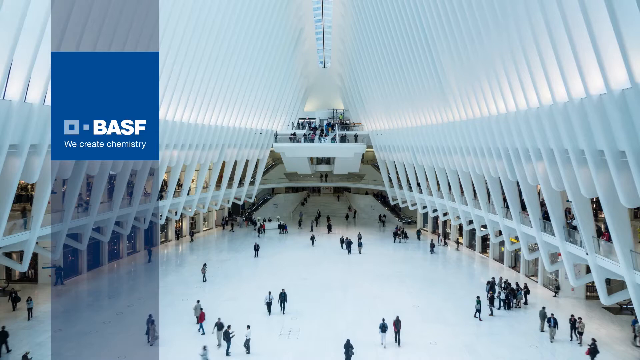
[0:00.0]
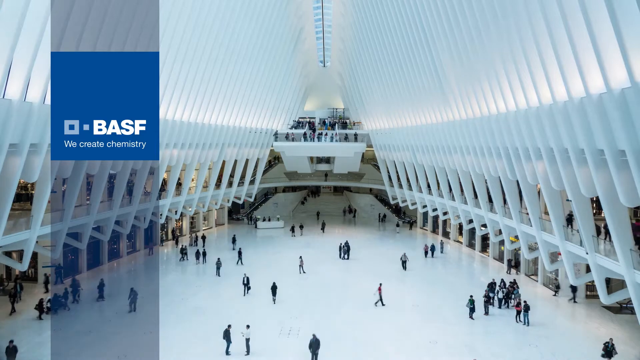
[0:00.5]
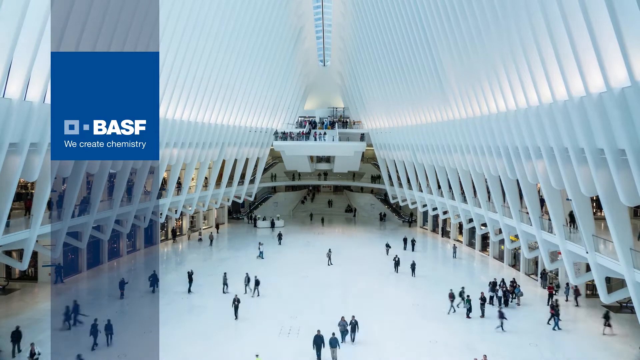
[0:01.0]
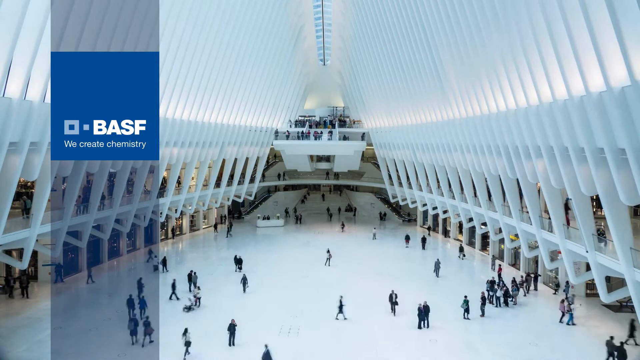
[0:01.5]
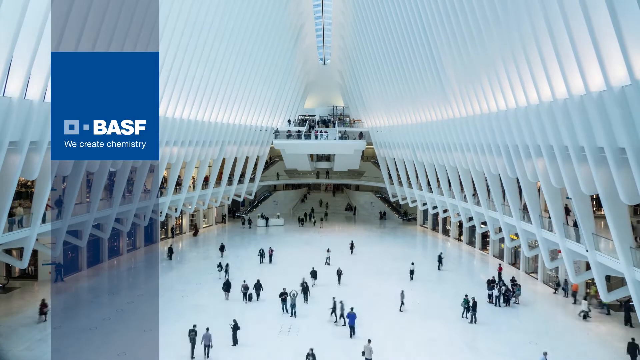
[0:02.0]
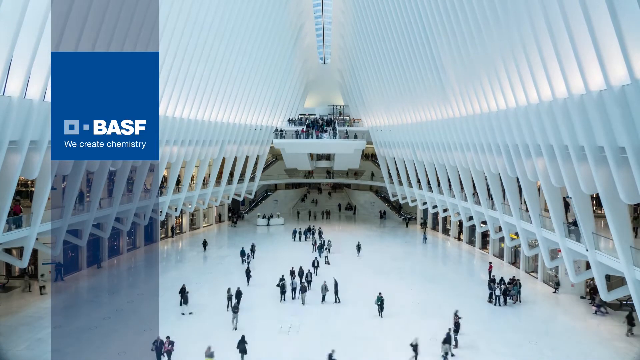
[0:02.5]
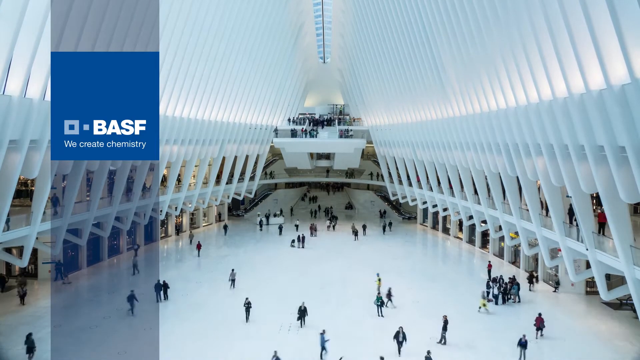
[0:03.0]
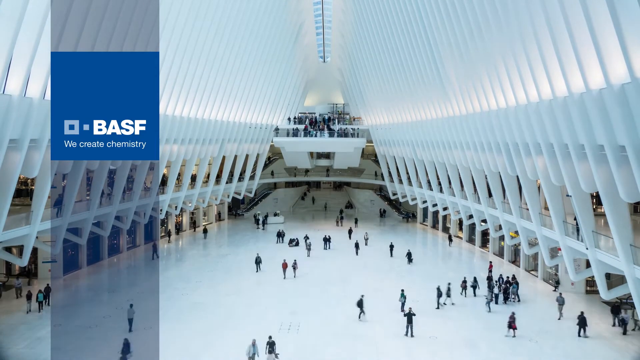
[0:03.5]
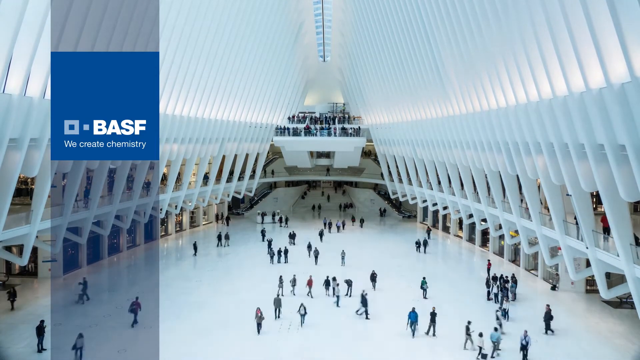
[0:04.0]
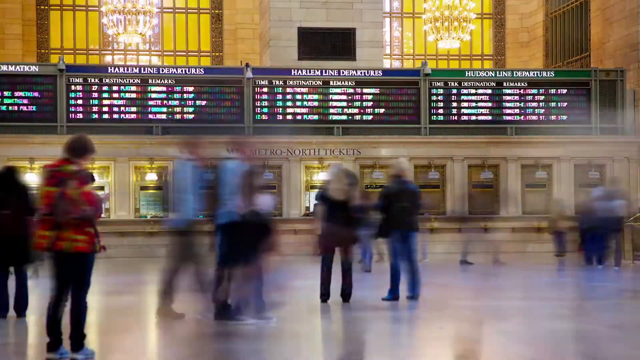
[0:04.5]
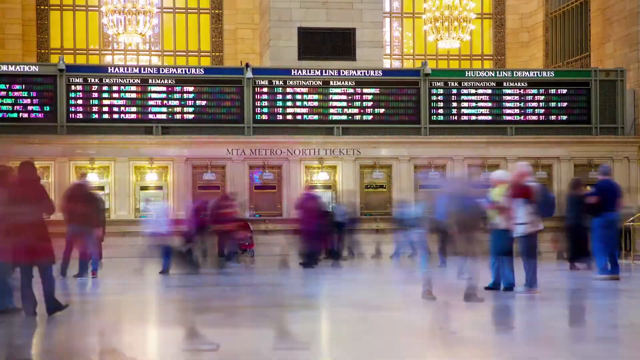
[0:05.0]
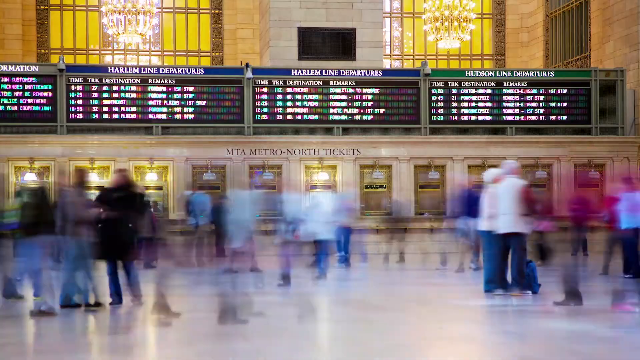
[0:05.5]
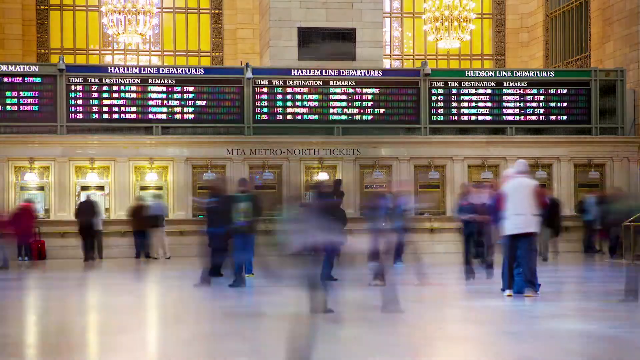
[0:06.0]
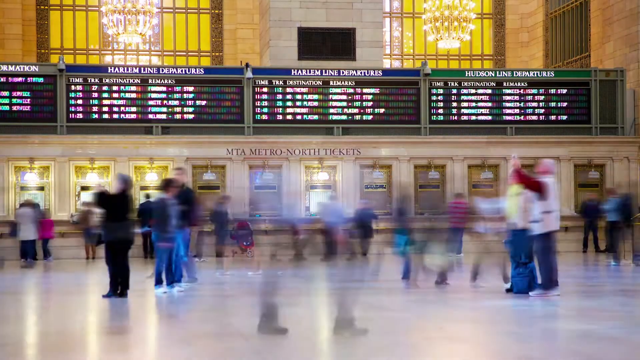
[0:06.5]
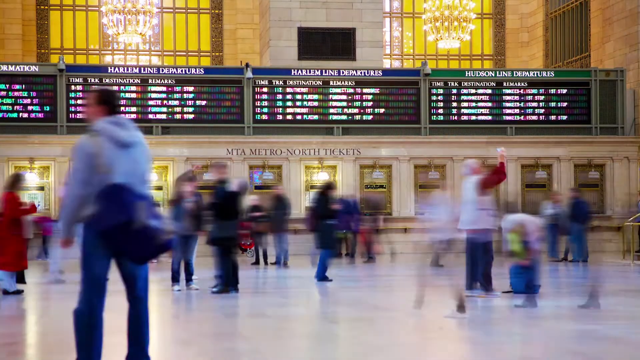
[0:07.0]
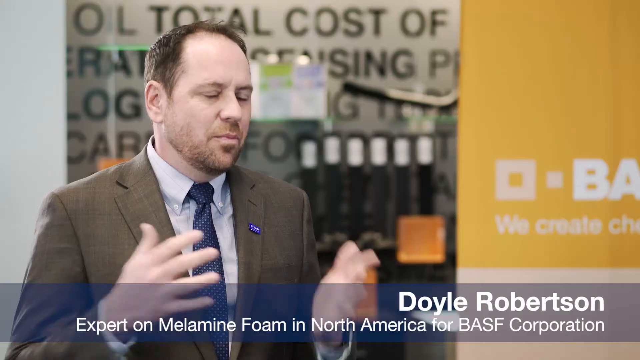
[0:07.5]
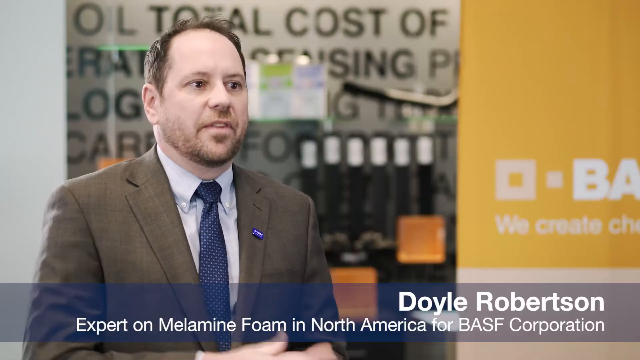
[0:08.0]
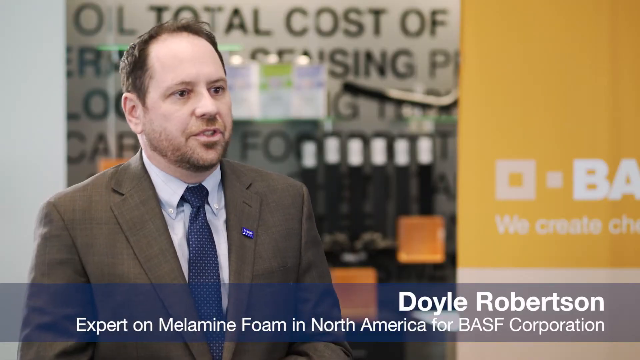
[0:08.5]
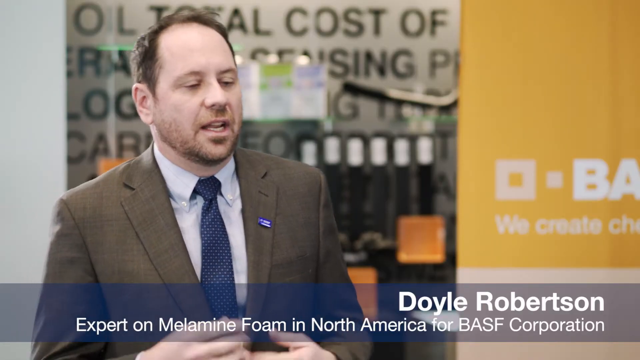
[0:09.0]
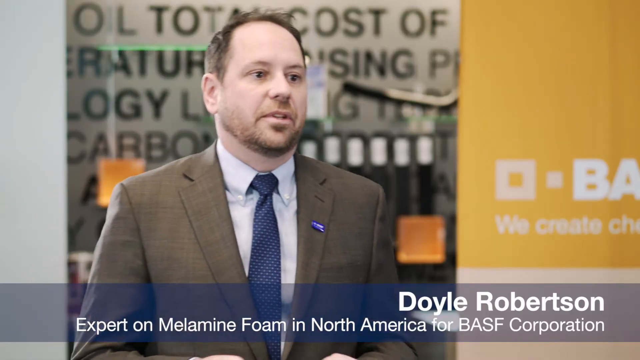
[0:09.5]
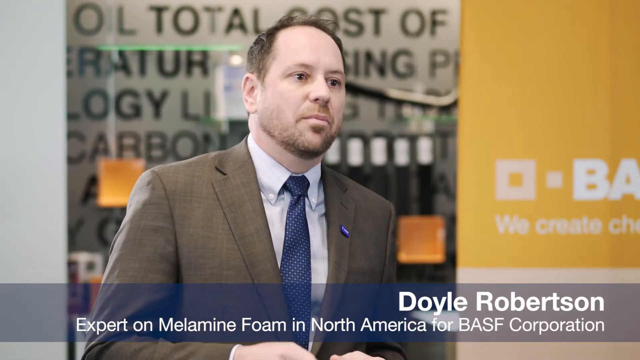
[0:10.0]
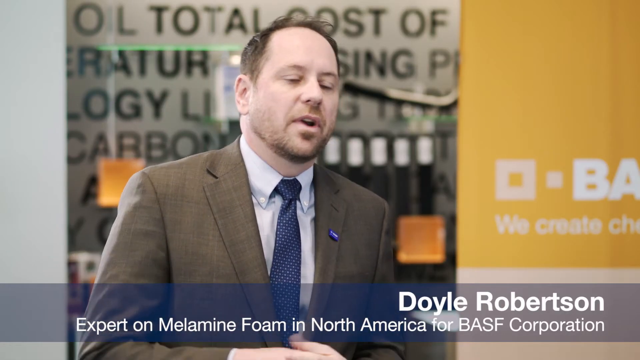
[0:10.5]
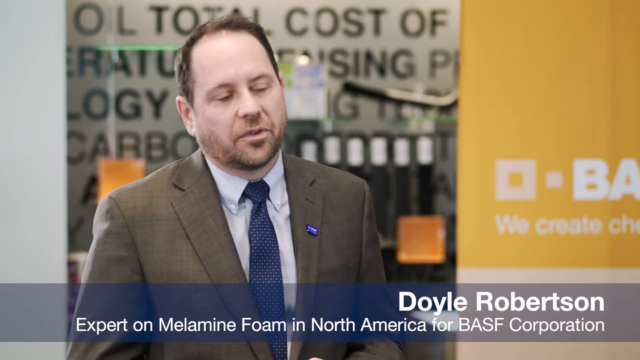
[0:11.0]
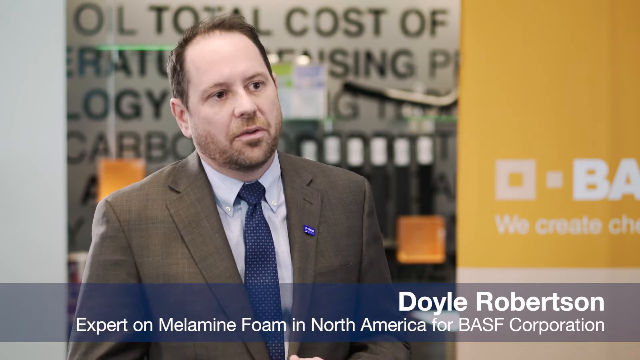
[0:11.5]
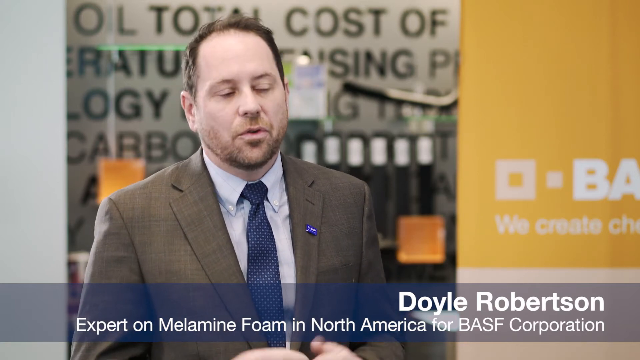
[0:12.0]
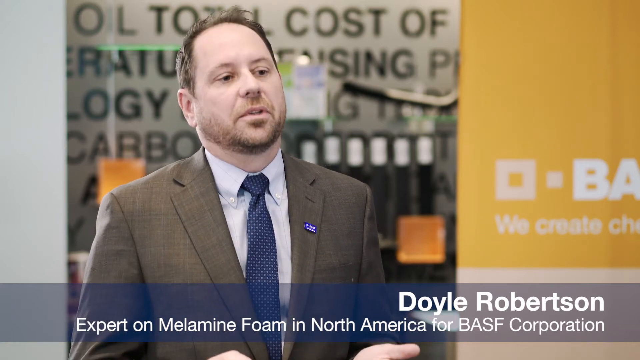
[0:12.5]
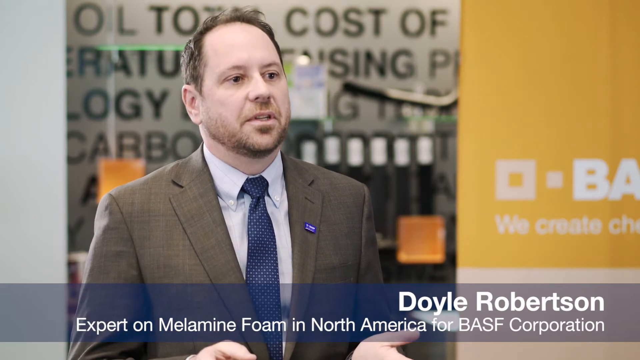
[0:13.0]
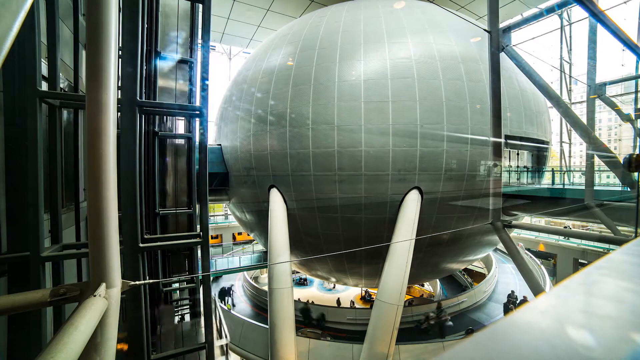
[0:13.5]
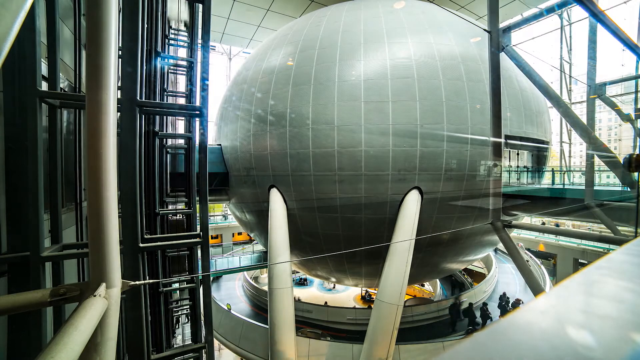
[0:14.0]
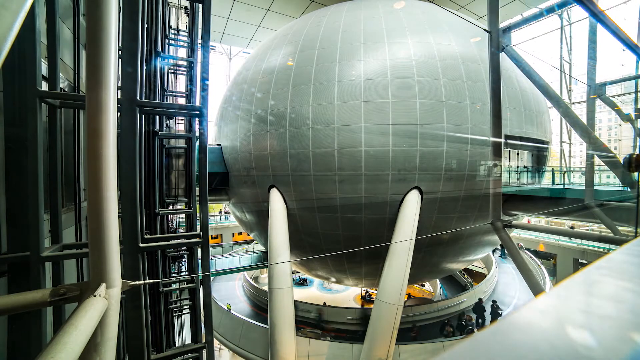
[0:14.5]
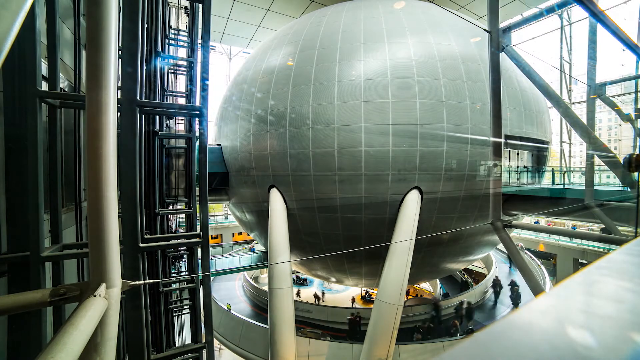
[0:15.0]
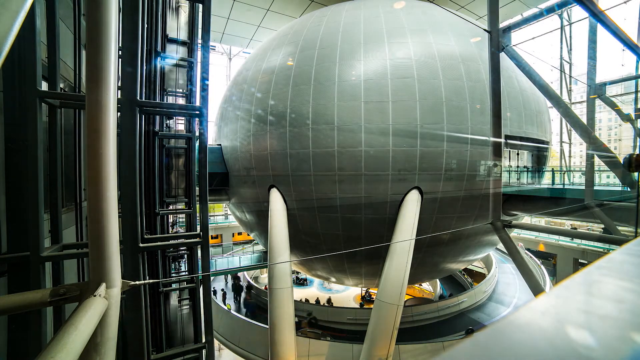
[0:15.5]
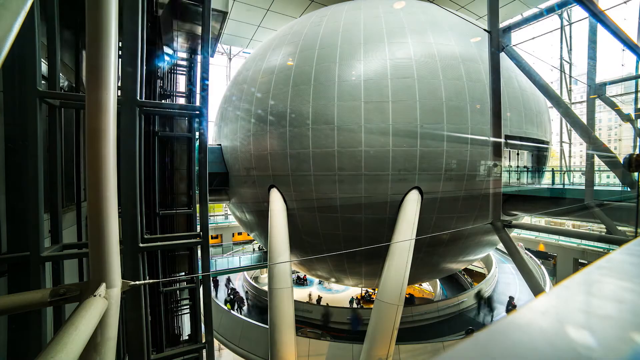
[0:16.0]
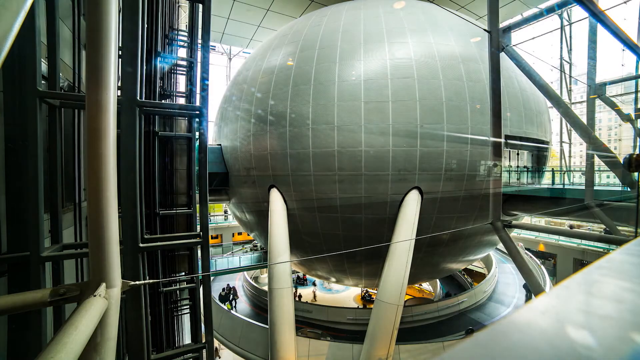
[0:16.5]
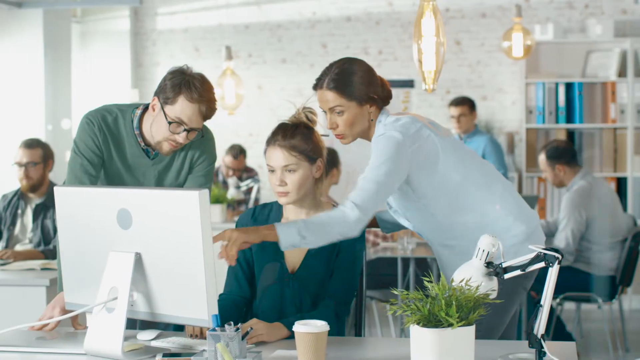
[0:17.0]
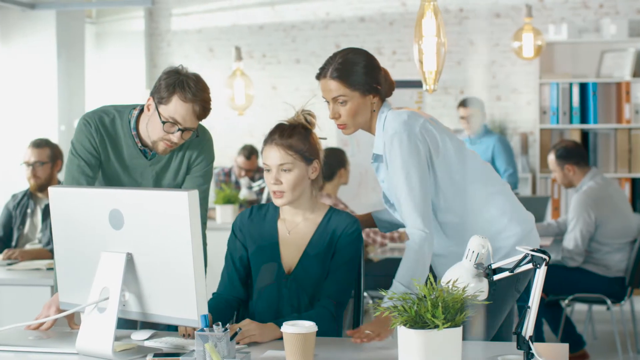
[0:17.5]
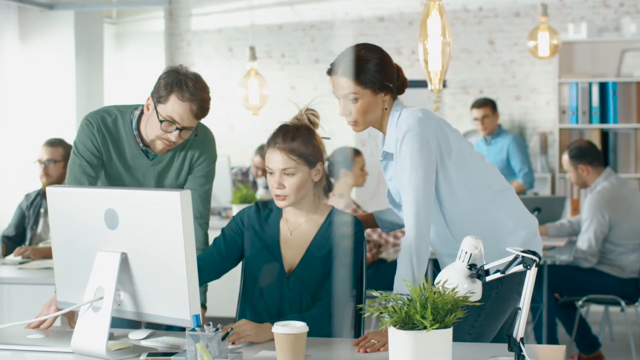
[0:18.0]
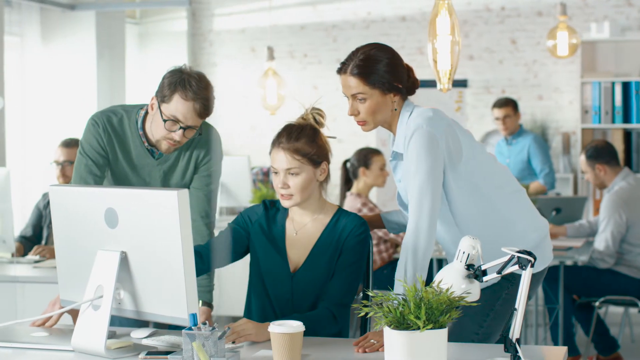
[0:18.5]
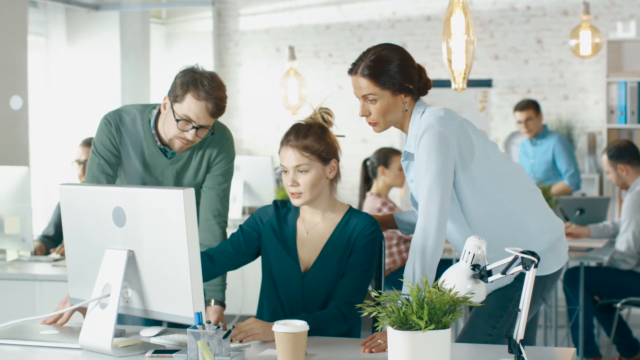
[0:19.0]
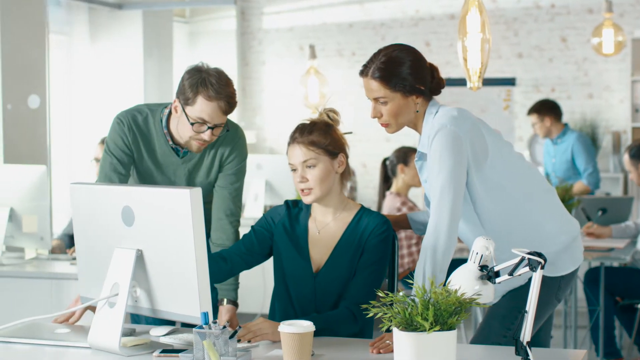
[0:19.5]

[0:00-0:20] Many people walk through a large building that looks like either an airport or a train station; the building looks a bit complicated but well built. Screens above read "departures" and appear to show the times when trains or other transport are due to depart. A man named Daley Robertson is talking; he works at BASF Corporation in North America and is an expert in melamine foam. The BASF name appears with the statement "we create chemistry" beneath it, suggesting it is a chemistry company, possibly involved in the foam business. Various people in an office look busy discussing something. A big silver oval thing hangs from the roof.